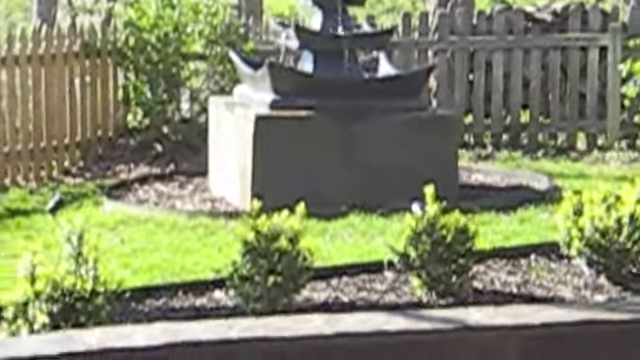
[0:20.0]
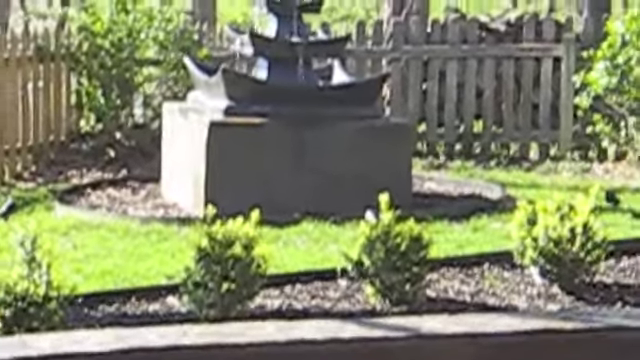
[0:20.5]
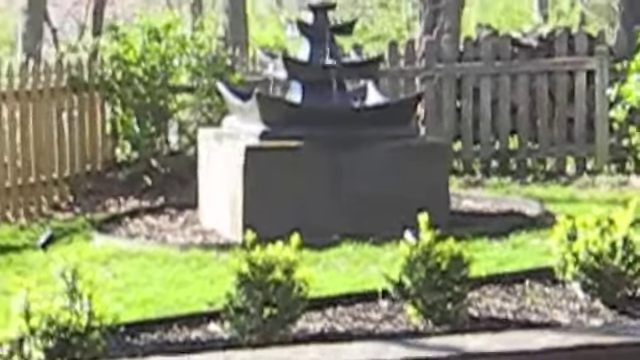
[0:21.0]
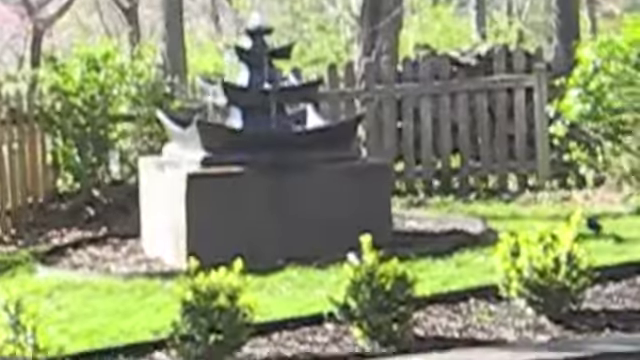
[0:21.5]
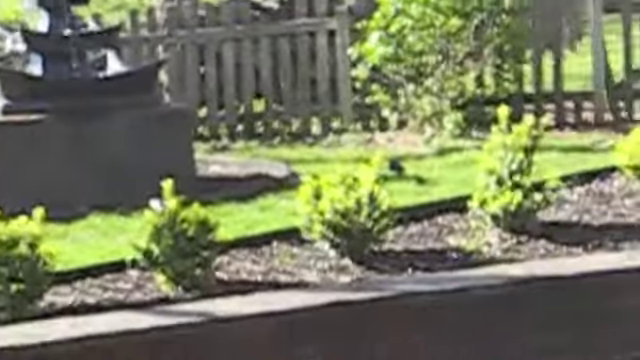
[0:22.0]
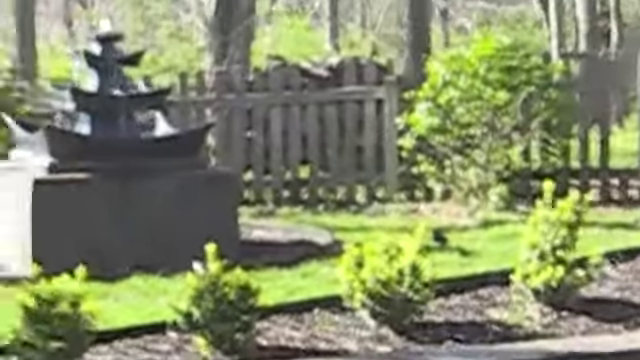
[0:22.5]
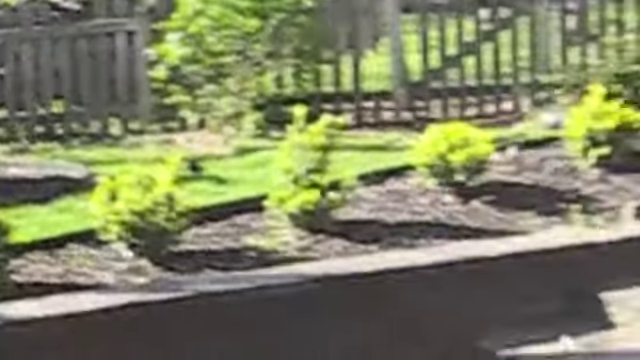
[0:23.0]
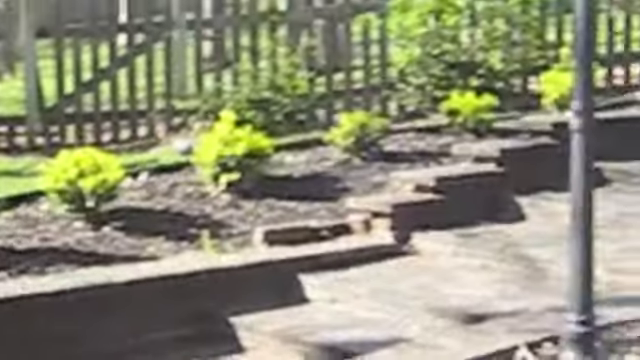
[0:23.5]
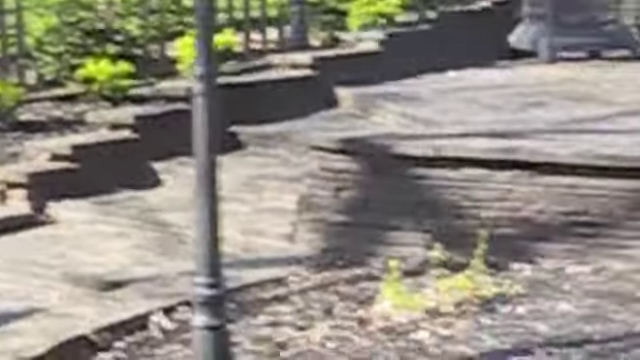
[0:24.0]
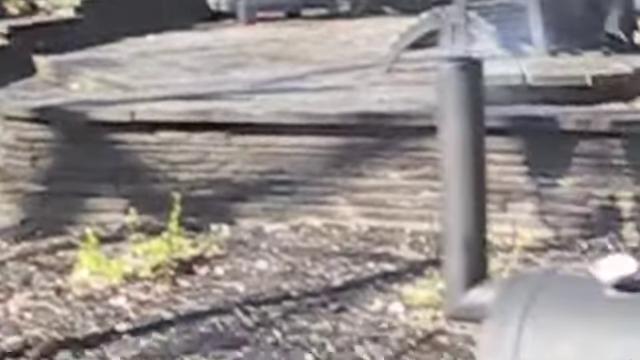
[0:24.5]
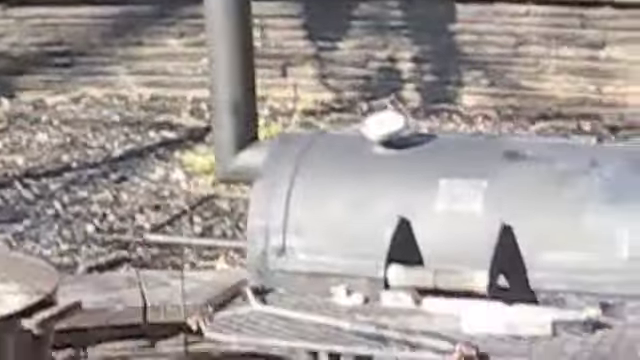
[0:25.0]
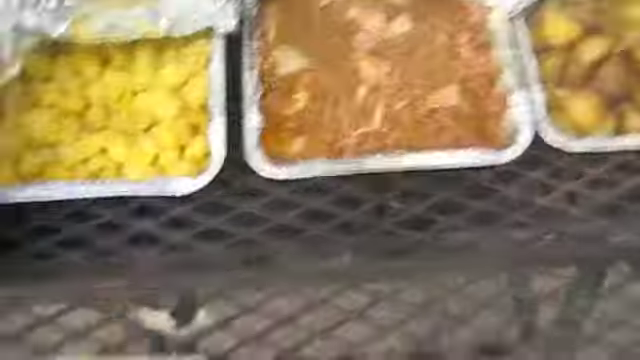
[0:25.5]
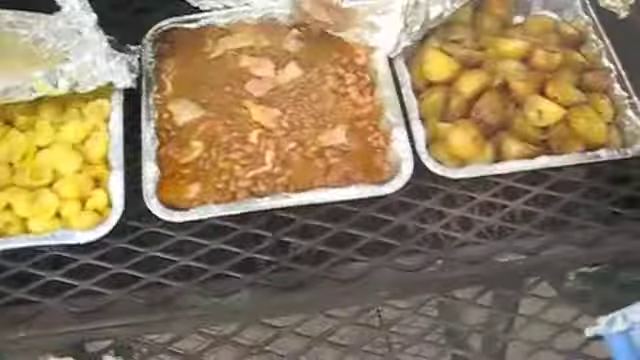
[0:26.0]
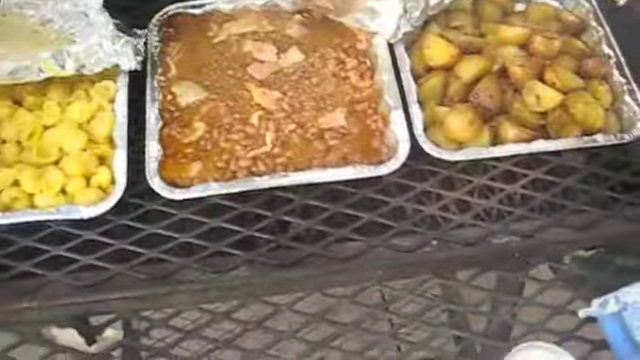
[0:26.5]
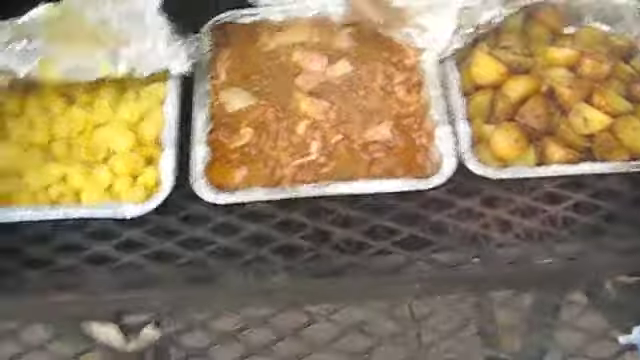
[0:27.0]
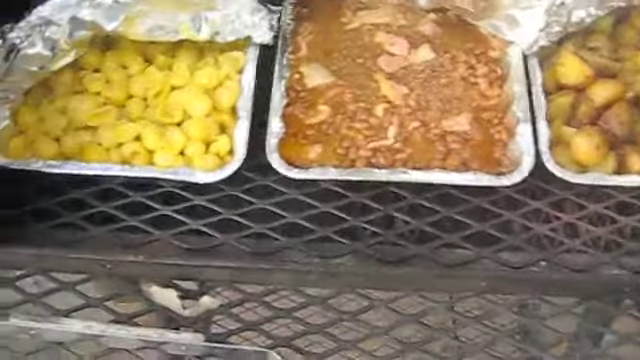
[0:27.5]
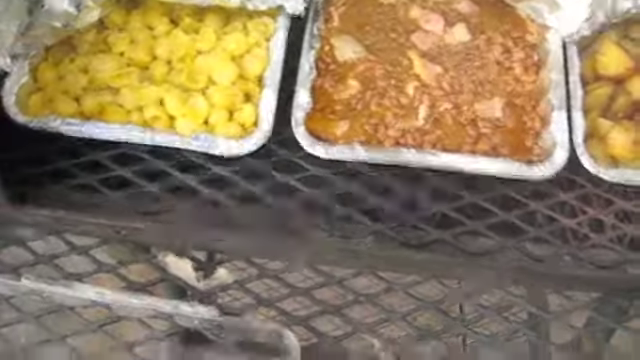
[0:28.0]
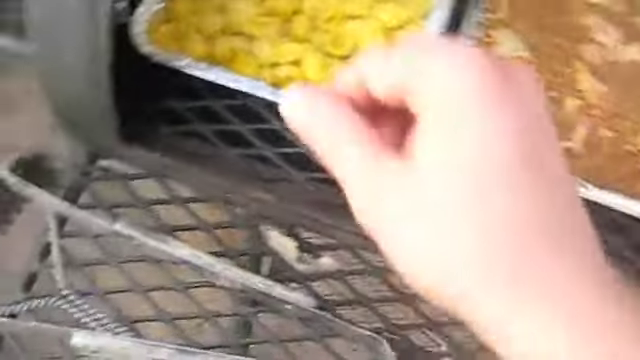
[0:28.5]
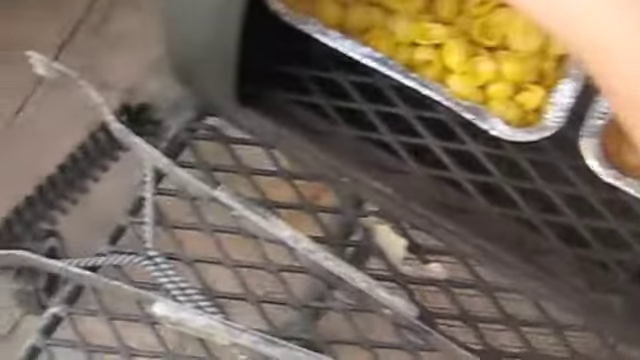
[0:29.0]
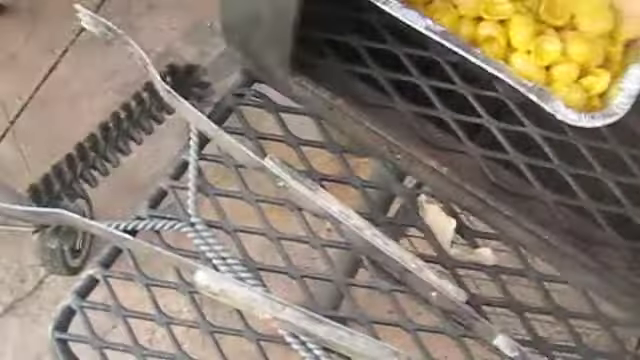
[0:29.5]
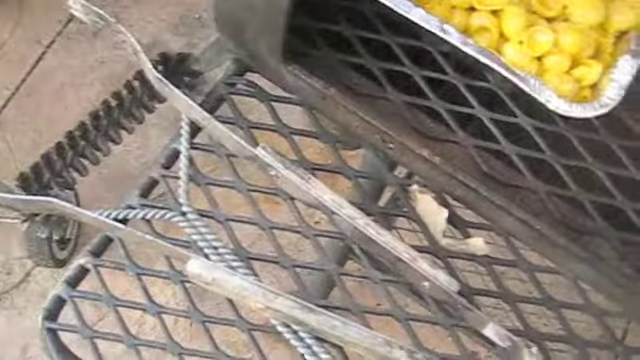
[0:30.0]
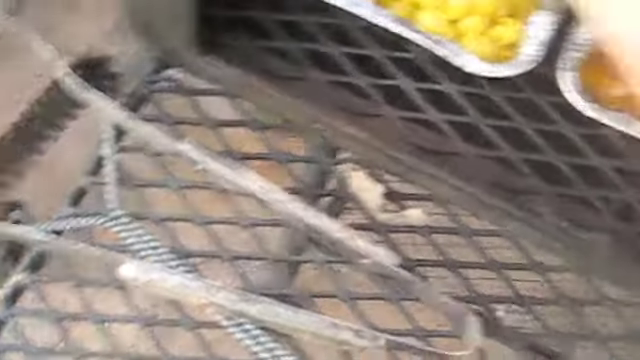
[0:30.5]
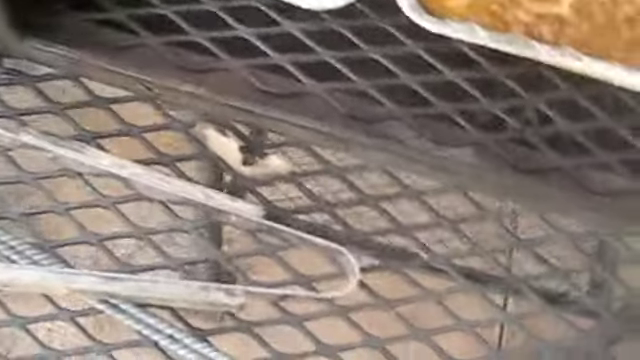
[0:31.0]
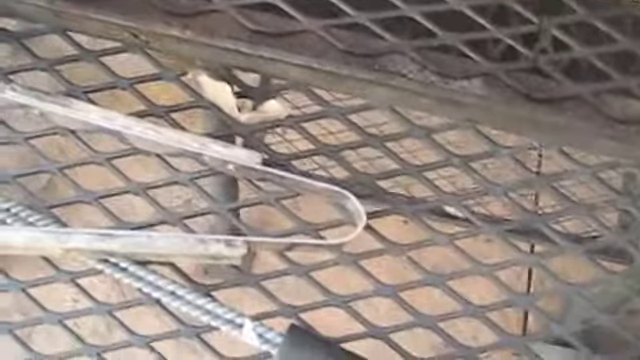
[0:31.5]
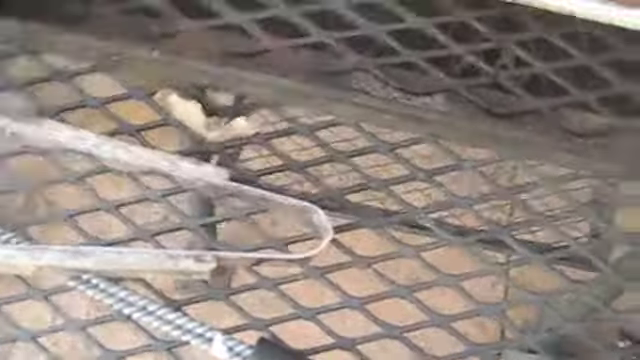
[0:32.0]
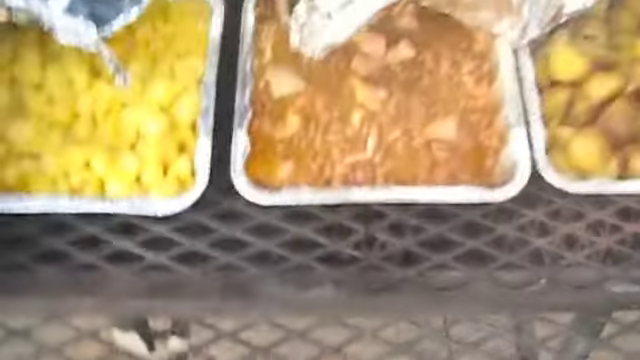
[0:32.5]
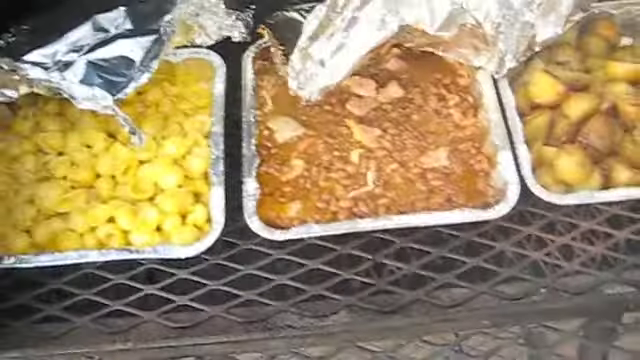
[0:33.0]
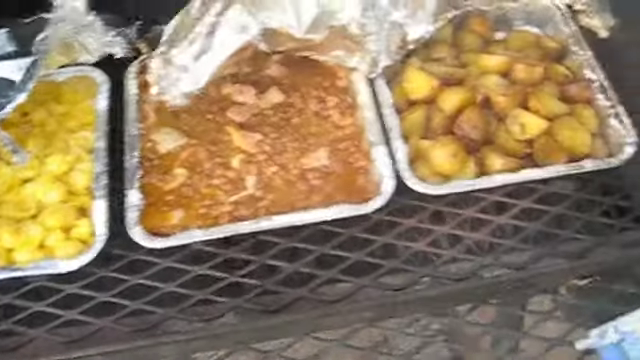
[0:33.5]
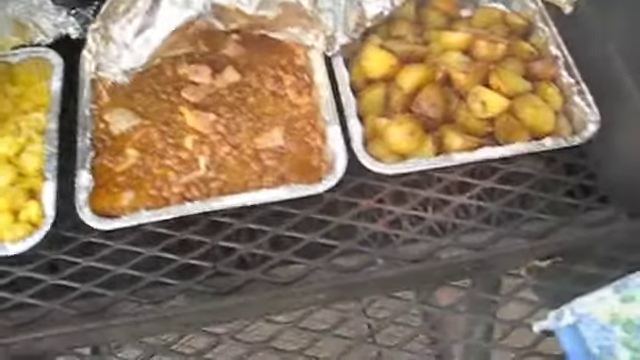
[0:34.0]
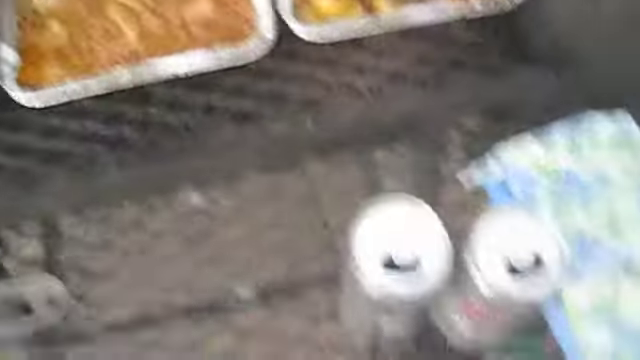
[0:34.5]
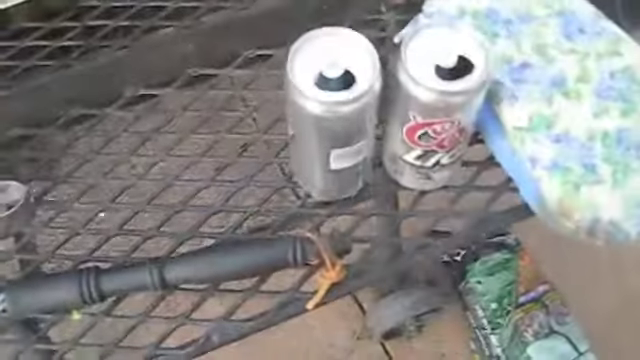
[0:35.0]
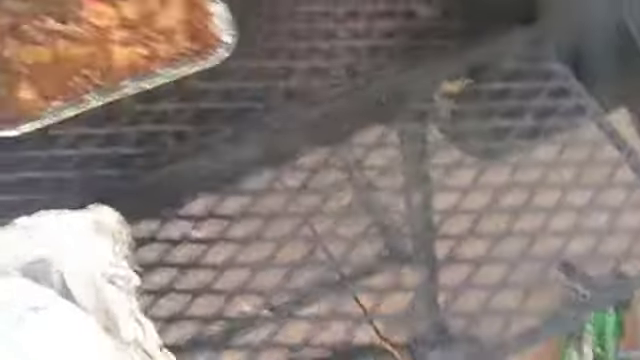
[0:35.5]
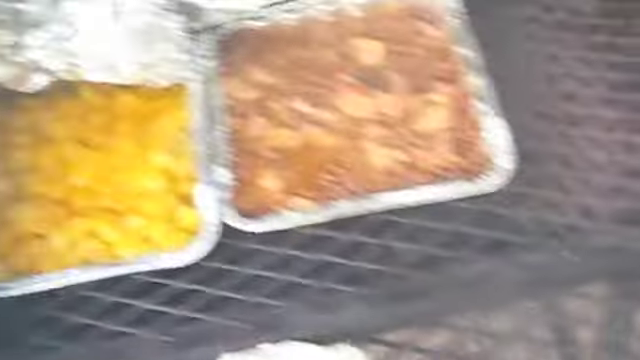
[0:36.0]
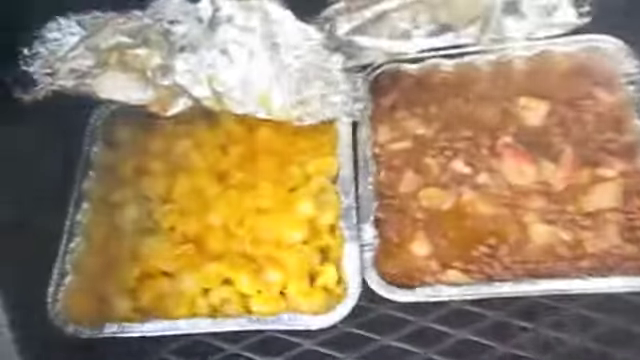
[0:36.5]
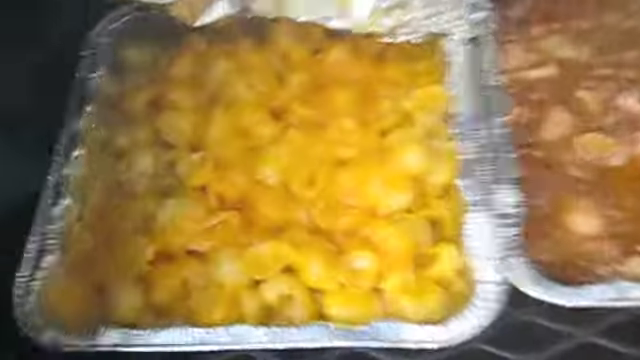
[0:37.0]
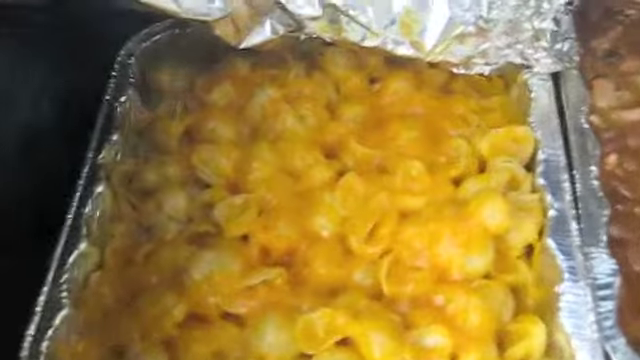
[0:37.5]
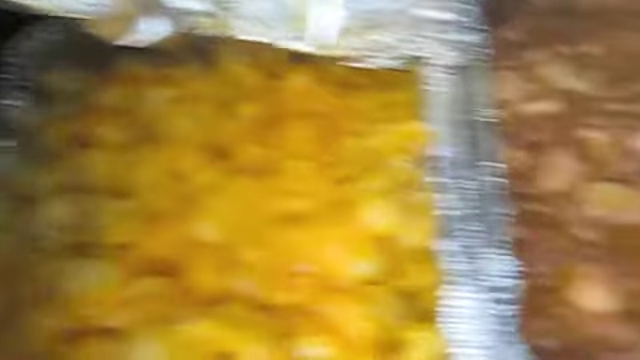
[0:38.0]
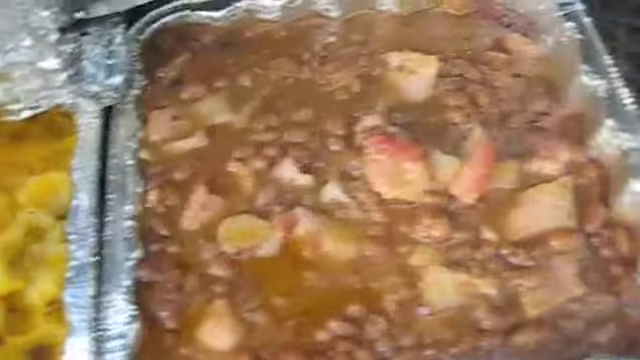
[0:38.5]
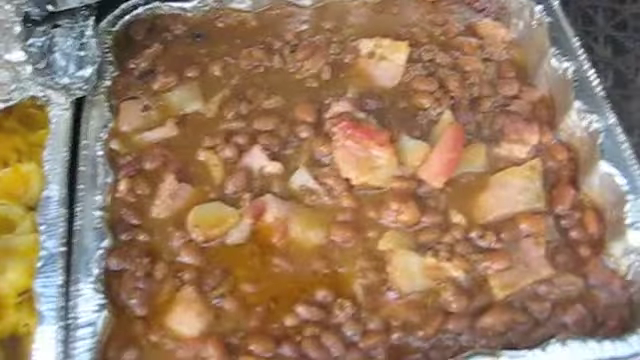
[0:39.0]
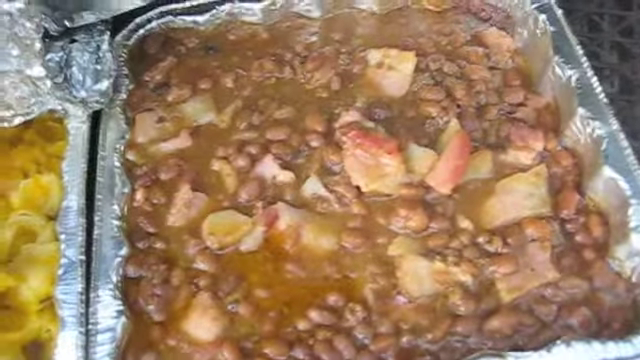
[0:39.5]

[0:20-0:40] The place has green grass, green flowers and an open space. A close view shows one of the stands, where cooking is apparently going on and meat is being fried. There are different types of food: something that looks like potatoes, something that looks like macaroni, and food that looks like mince. A person's hand reaches in to pick up some of the food. On another stand, there appears to be meat being fried. There are also cans, possibly drinks the person cooking was having.